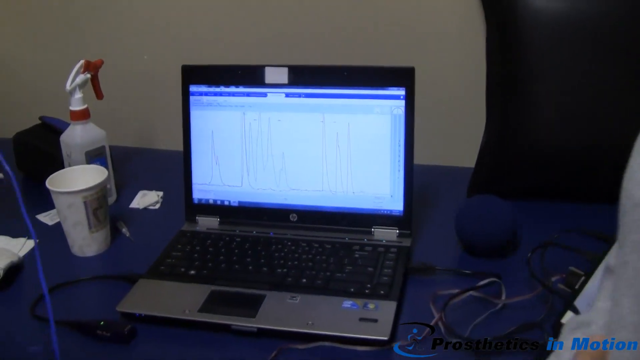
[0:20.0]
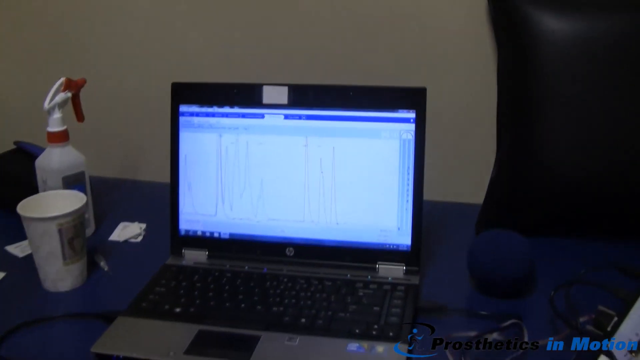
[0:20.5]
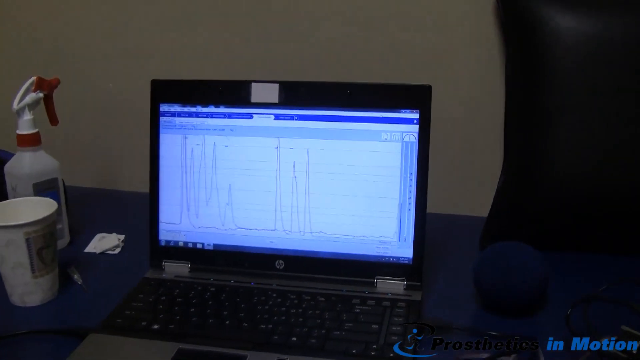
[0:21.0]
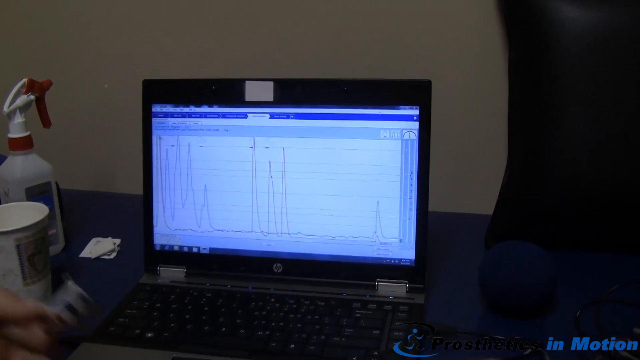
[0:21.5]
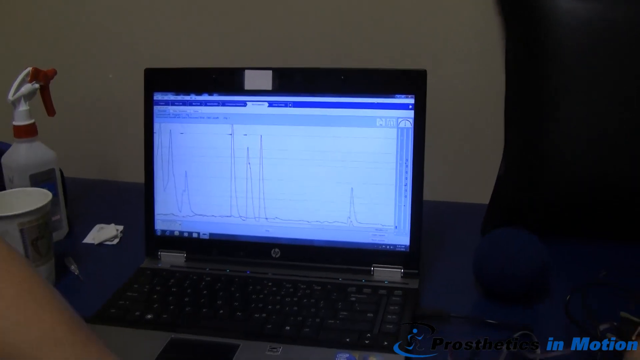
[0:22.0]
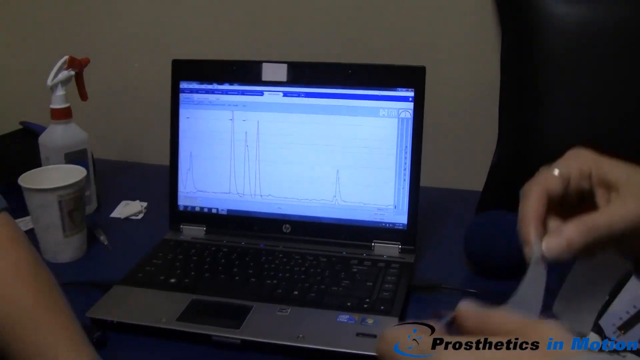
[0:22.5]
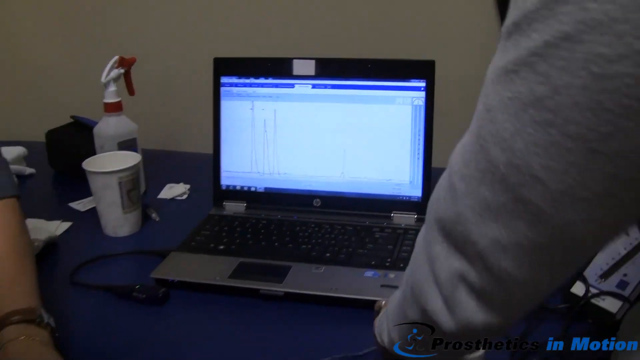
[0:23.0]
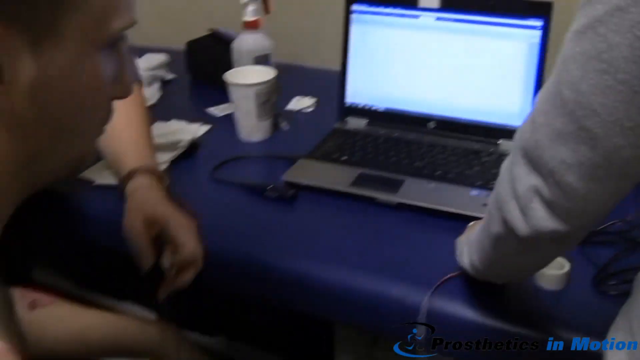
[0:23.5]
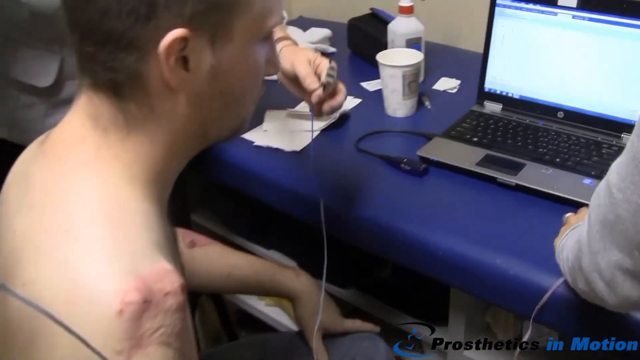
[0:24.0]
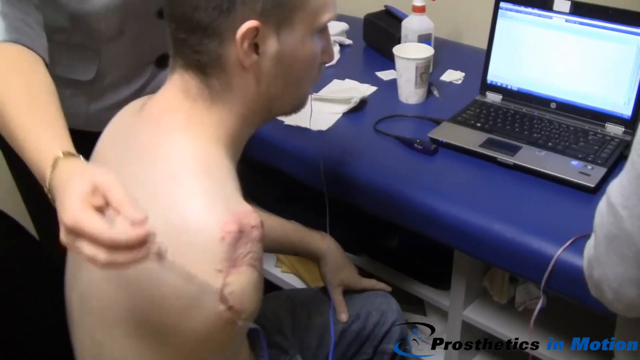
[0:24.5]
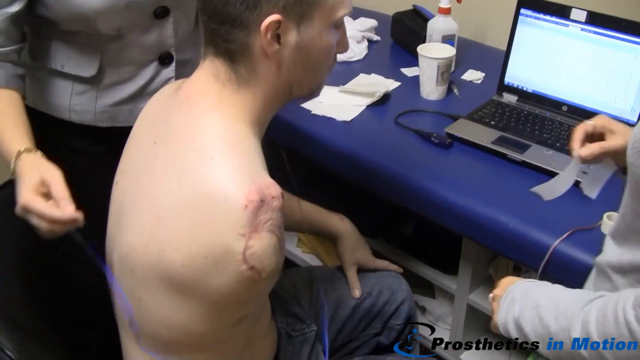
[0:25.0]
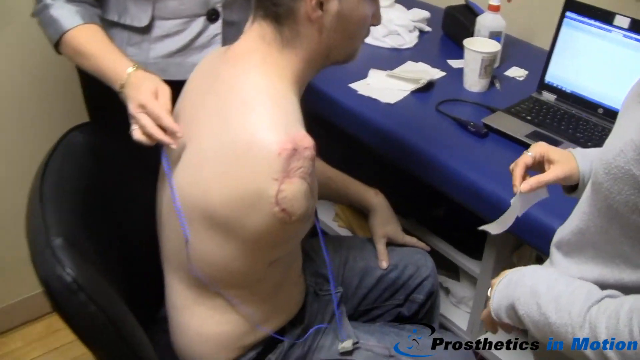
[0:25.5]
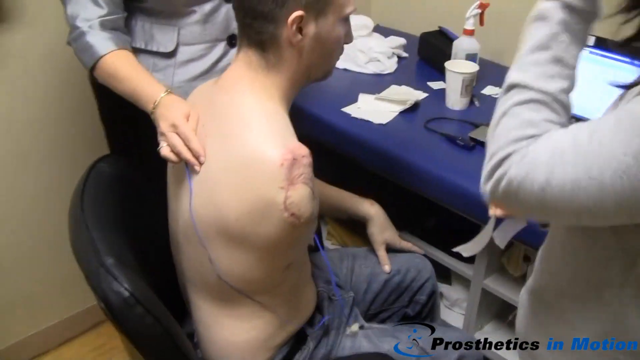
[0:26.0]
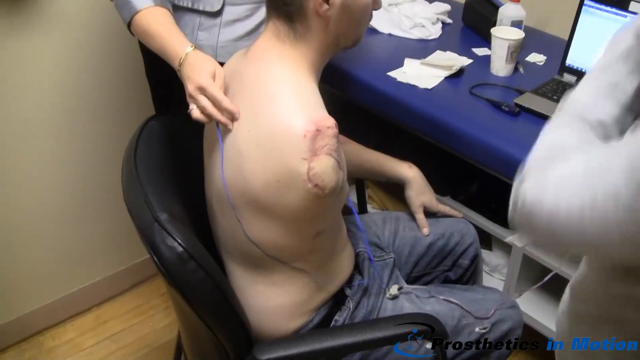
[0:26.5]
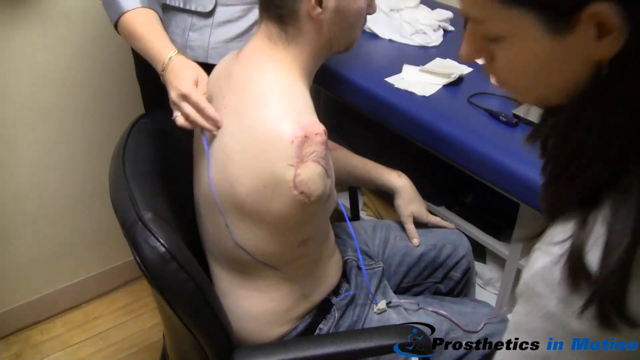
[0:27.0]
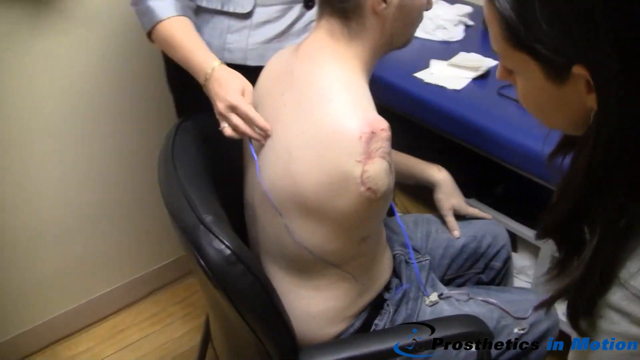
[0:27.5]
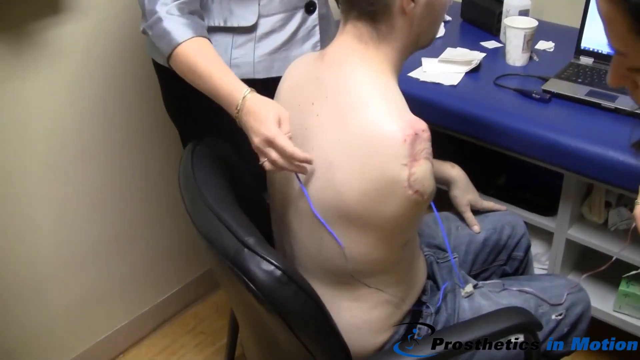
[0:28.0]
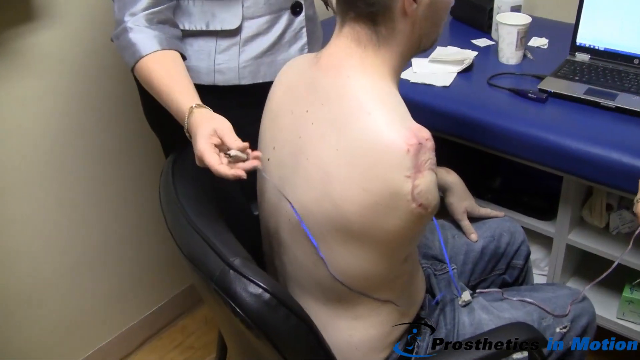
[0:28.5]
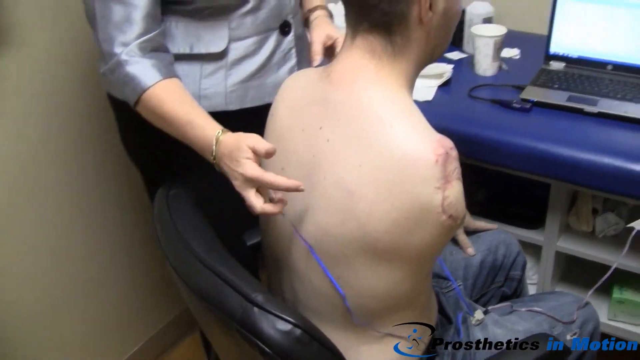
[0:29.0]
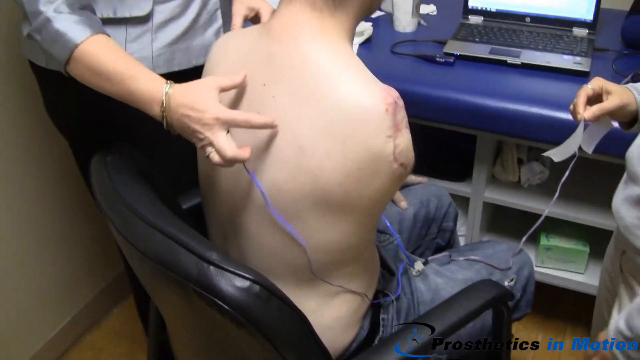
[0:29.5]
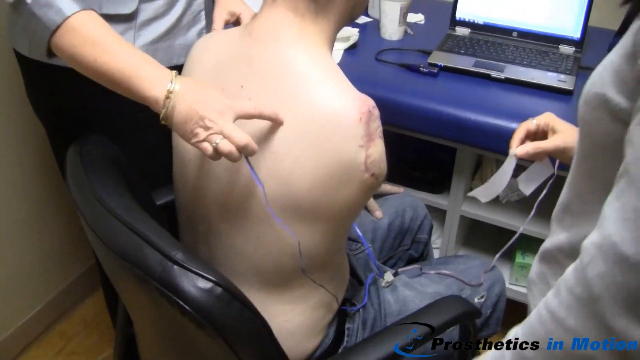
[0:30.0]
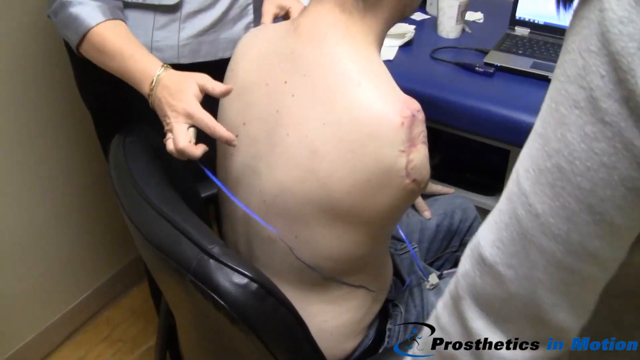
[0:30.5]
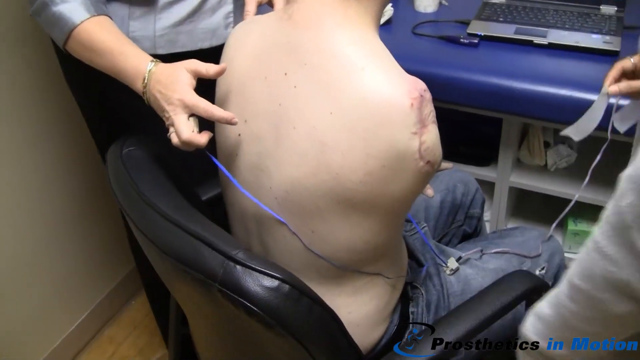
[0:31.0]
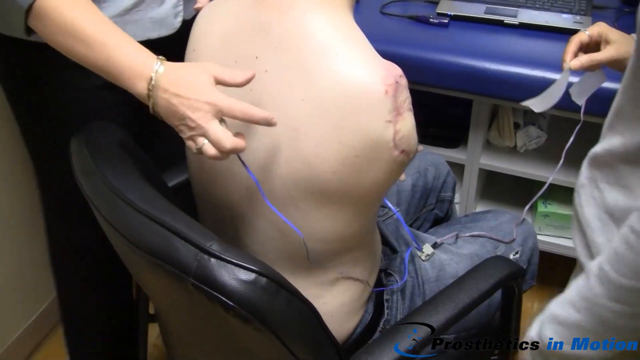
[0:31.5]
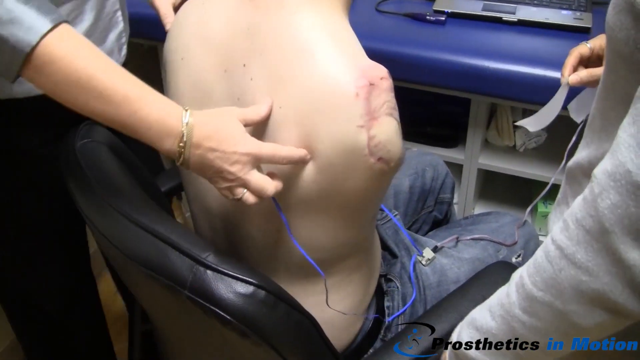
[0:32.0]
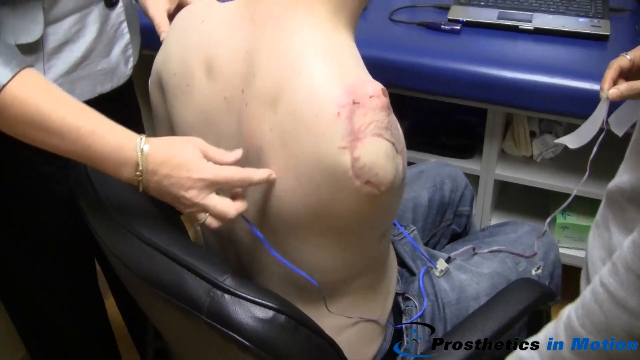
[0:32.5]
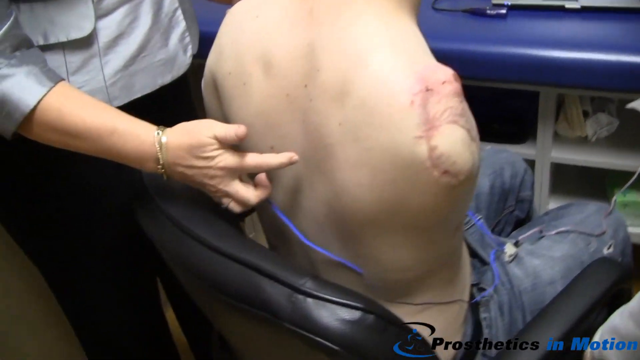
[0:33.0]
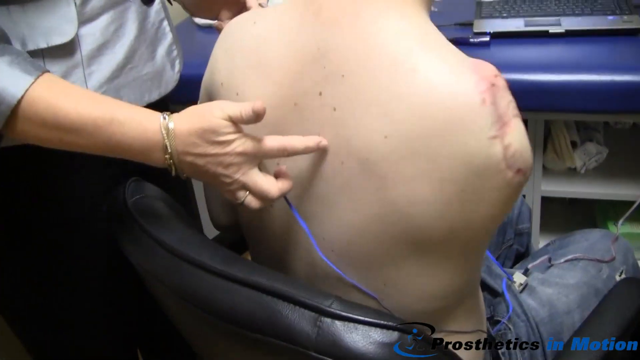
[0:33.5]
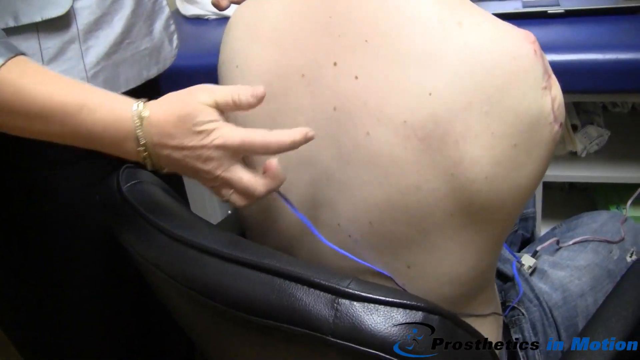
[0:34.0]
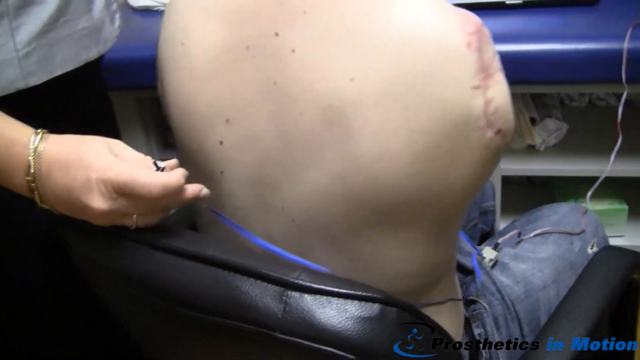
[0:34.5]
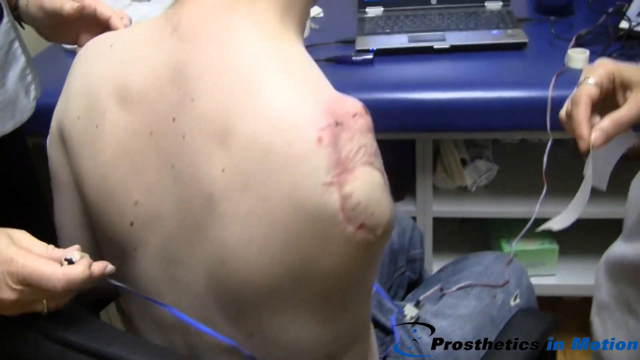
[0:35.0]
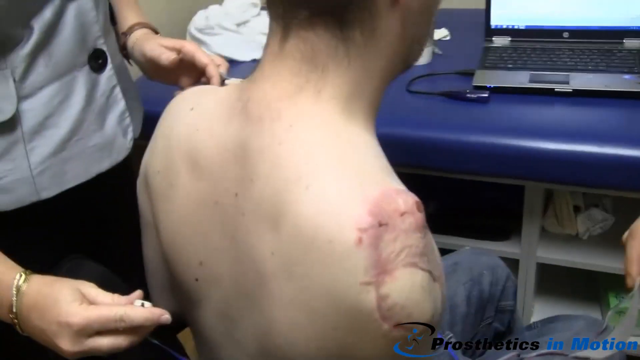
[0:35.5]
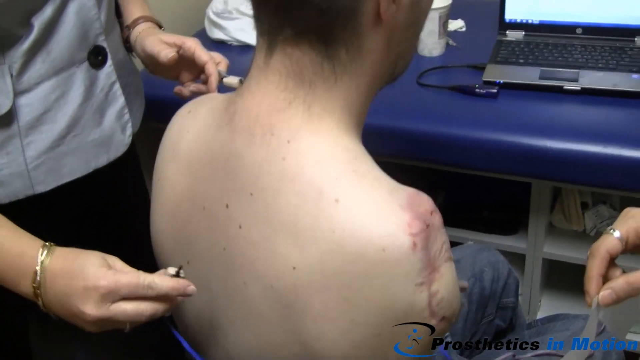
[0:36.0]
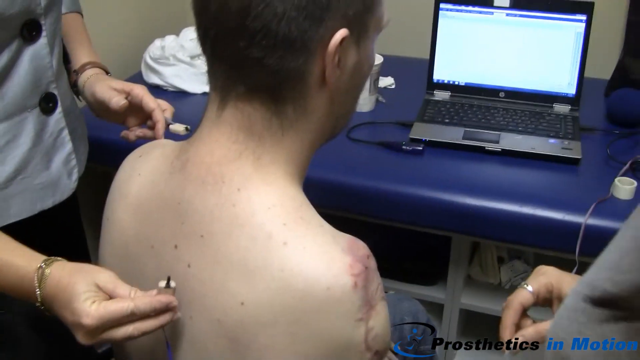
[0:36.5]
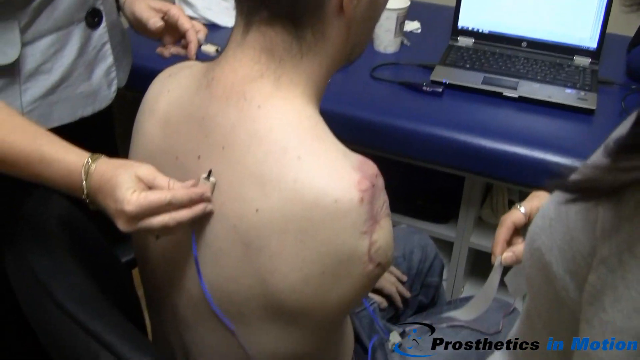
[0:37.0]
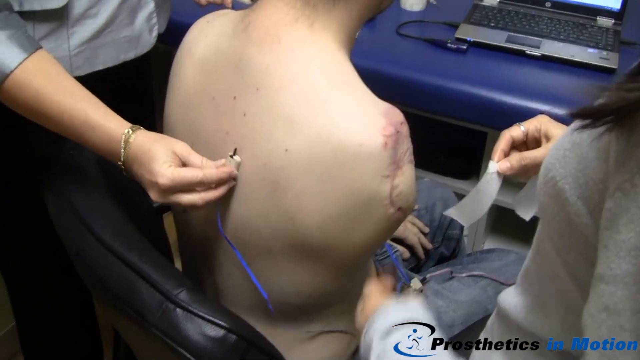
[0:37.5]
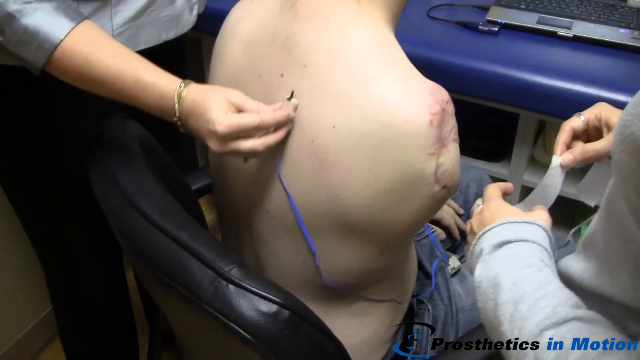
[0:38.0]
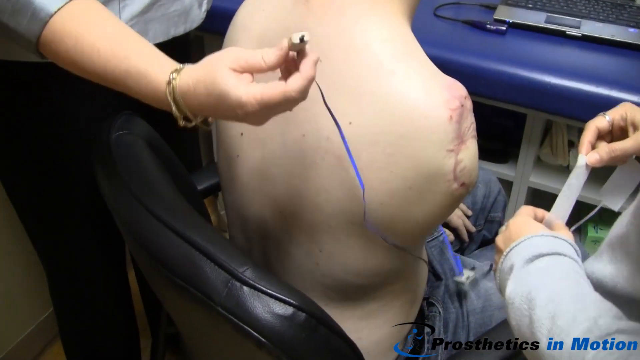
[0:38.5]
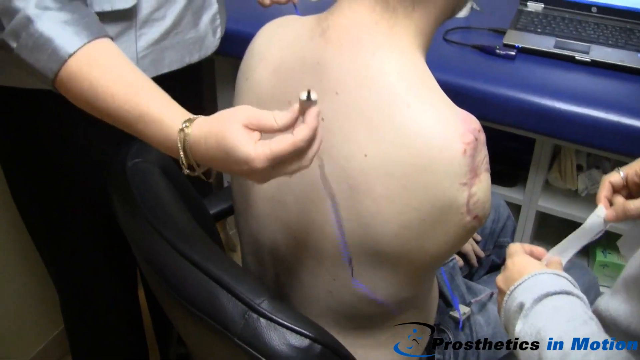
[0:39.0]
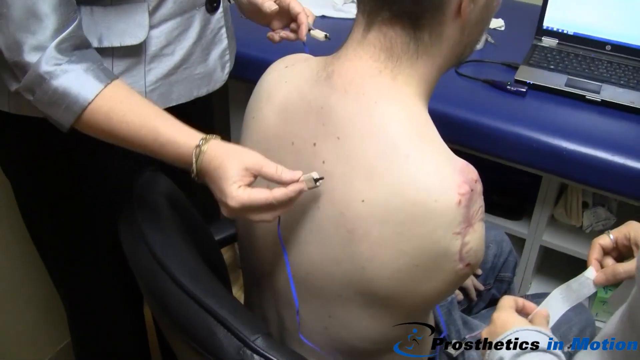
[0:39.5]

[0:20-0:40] In the office, the shirtless man with the shoulder amputation looks at a laptop screen. The woman in the silver jacket has just connected a gadget to the laptop, which shows a moving display of a line with peaks and troughs moving across the screen, measuring something. She picks up a connector linked to a wire, holding another in her other hand; the wires are blue, and she puts them around the patient's body. She gently rubs the area at the back of his shoulder blade in a circular motion and seems to measure a distance with her thumb and finger over both shoulder blades. The man stretches his shoulder blades backwards, revealing the dip between them, then moves them back to a normal seated position. The scars from his arm amputation at the shoulder are visible. The woman in the silver-grey jacket then moves the electrode-like object up and down between the centre of his spine and his right shoulder blade.